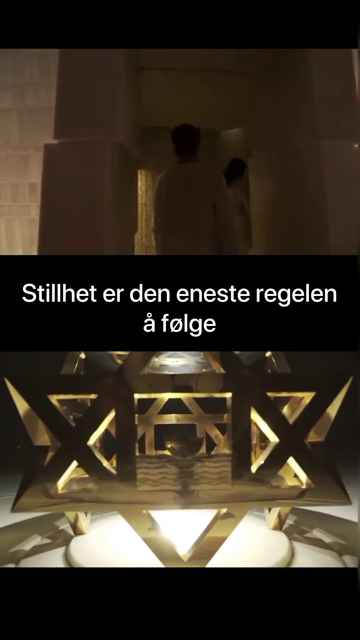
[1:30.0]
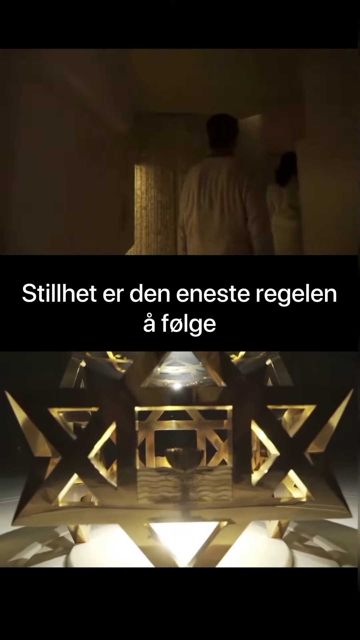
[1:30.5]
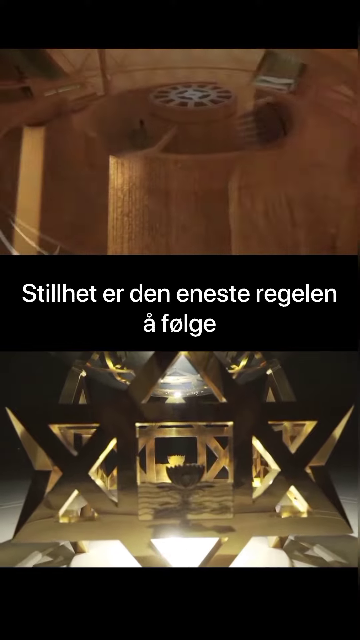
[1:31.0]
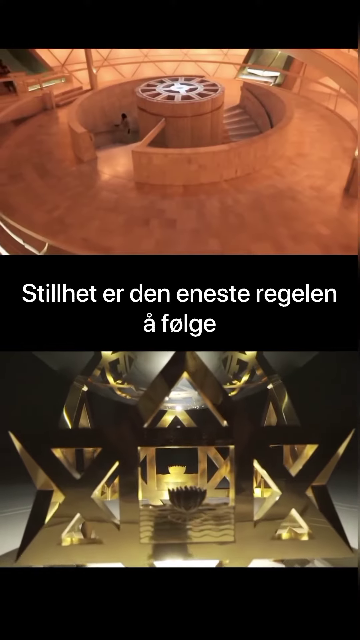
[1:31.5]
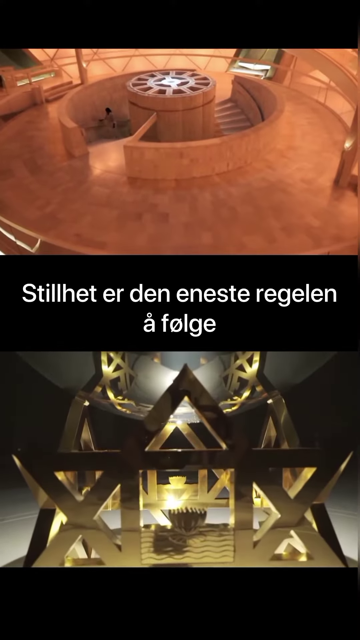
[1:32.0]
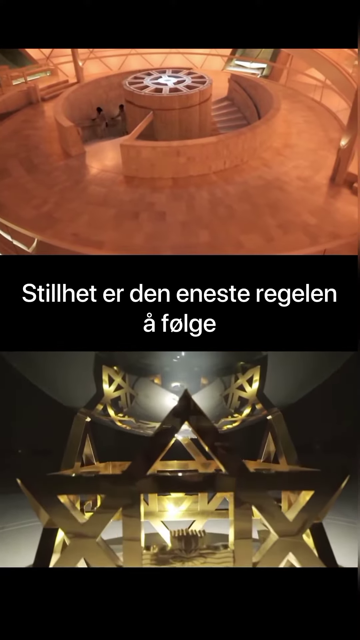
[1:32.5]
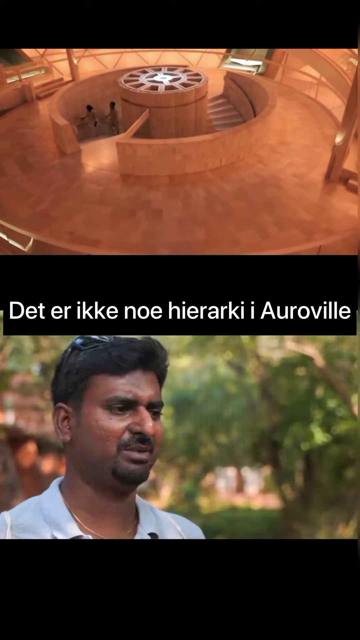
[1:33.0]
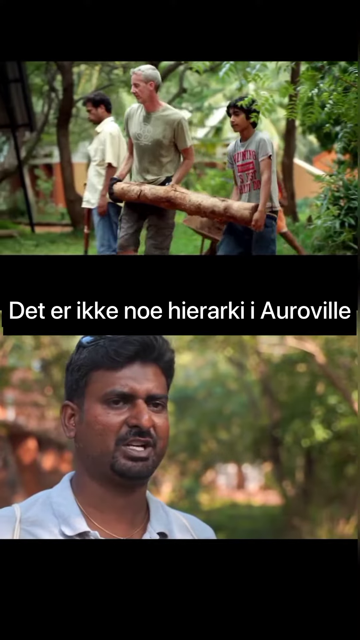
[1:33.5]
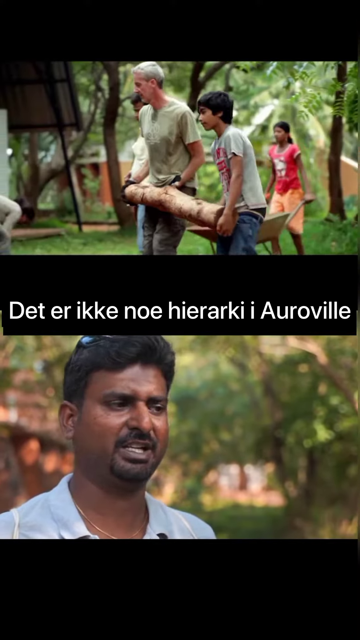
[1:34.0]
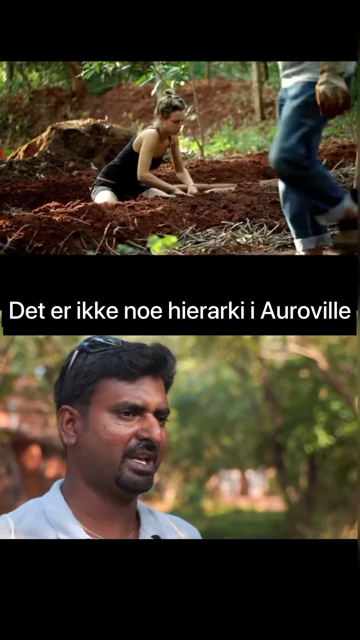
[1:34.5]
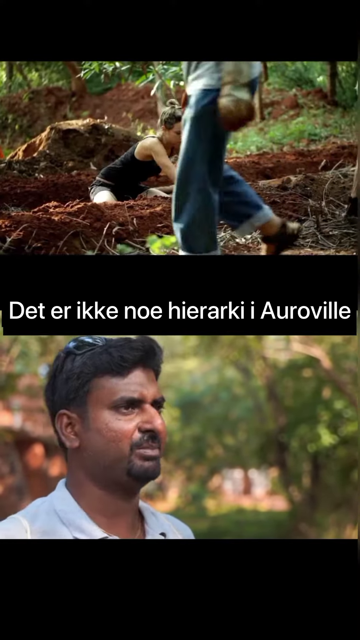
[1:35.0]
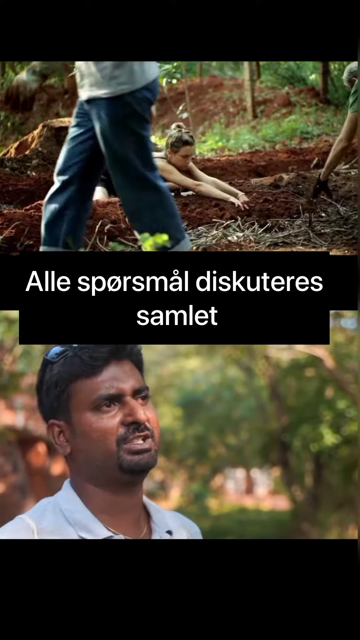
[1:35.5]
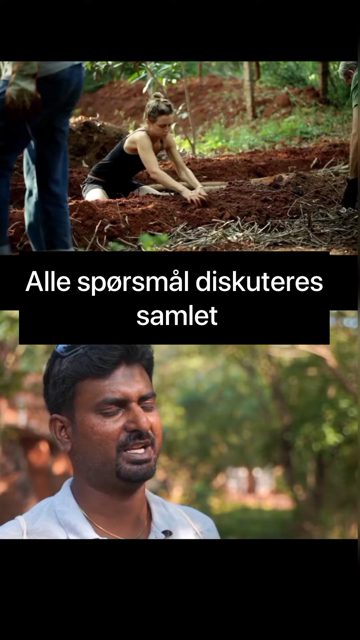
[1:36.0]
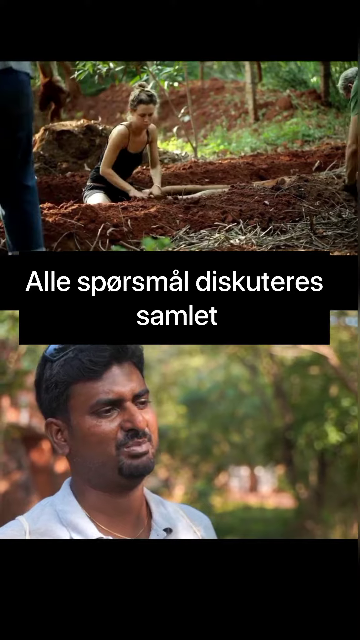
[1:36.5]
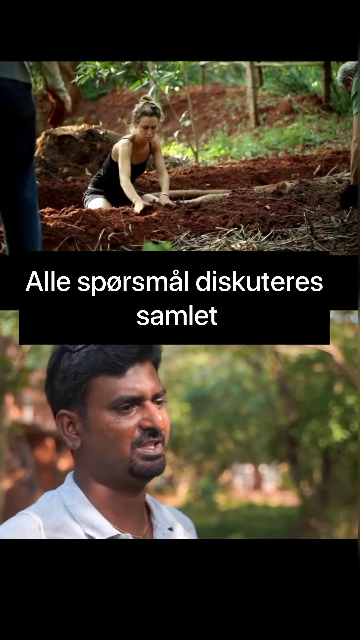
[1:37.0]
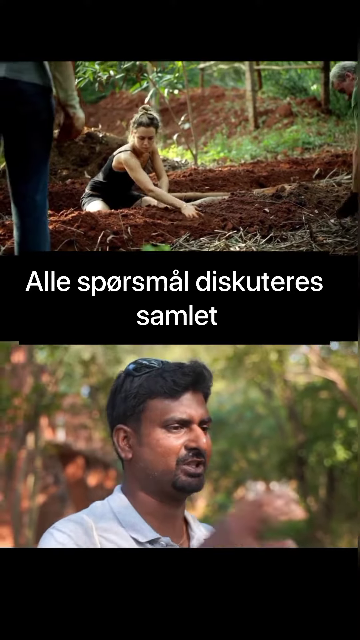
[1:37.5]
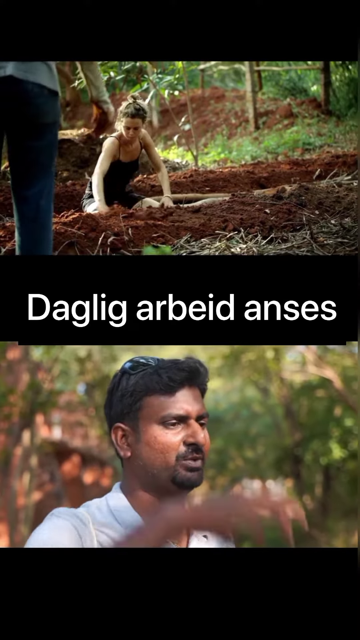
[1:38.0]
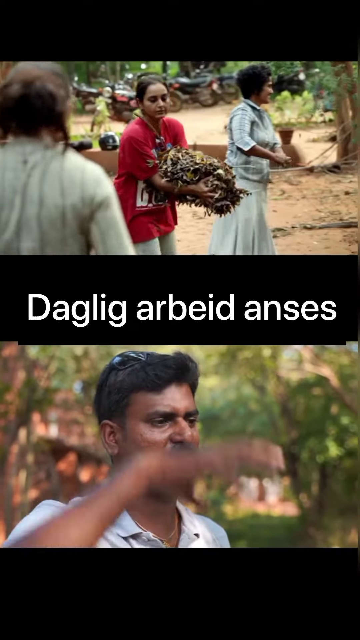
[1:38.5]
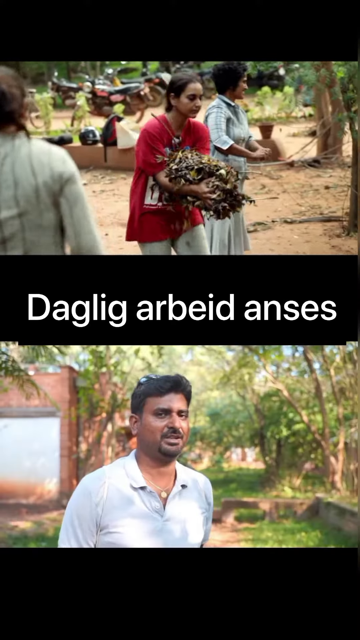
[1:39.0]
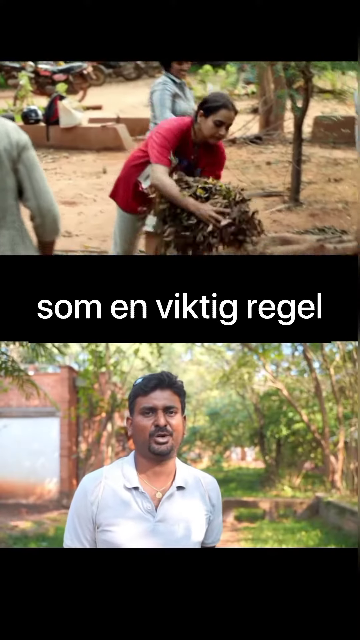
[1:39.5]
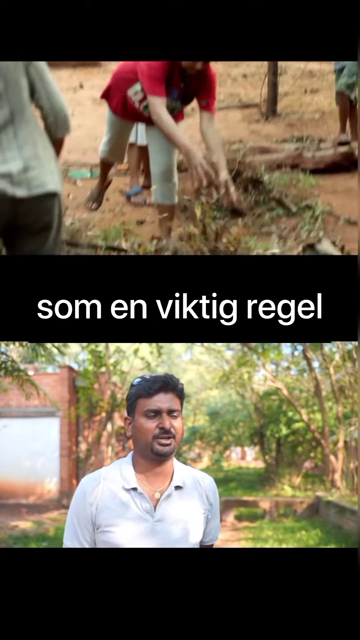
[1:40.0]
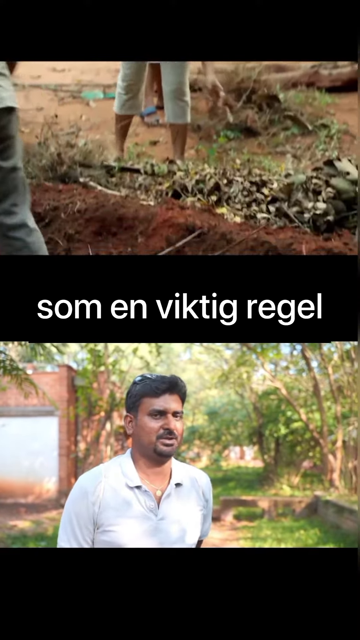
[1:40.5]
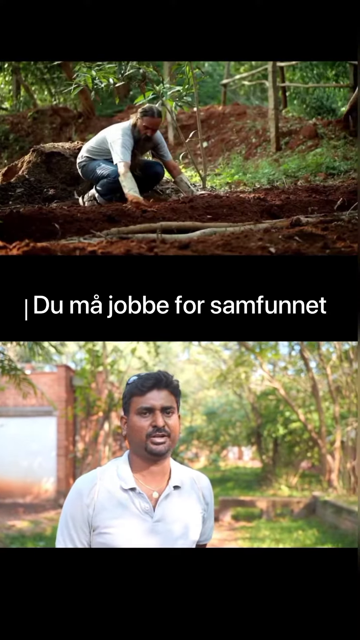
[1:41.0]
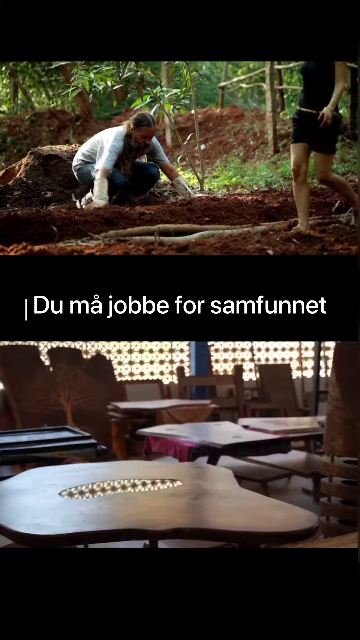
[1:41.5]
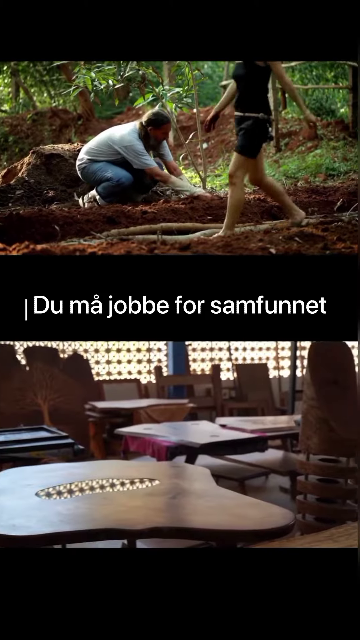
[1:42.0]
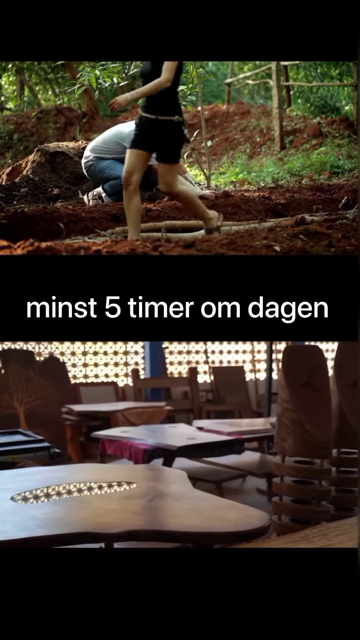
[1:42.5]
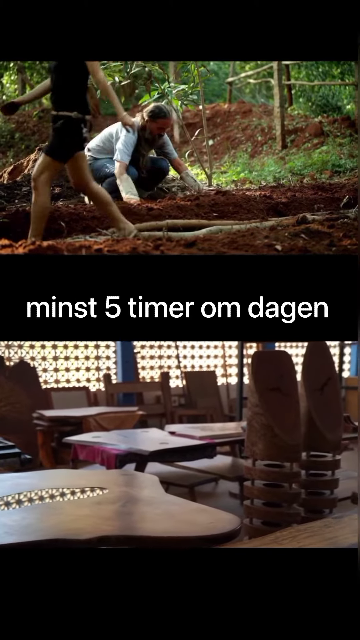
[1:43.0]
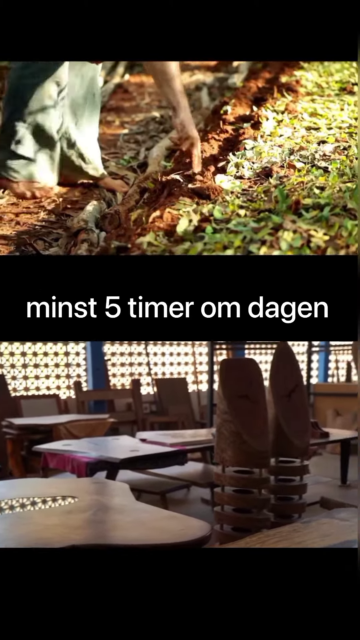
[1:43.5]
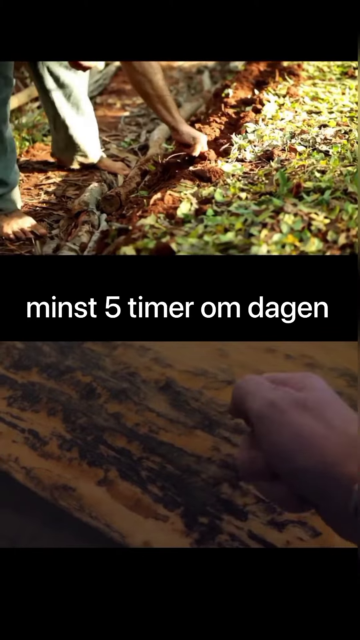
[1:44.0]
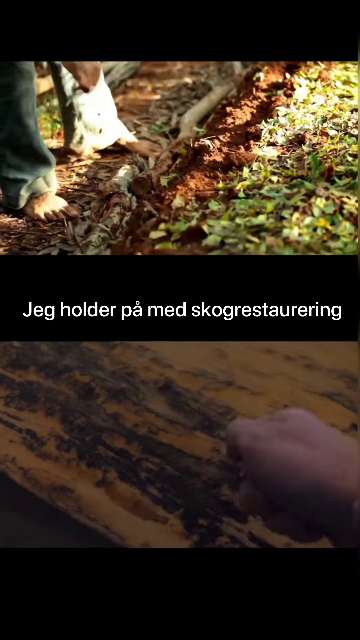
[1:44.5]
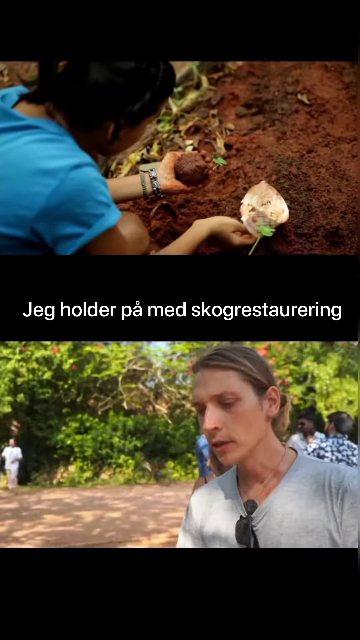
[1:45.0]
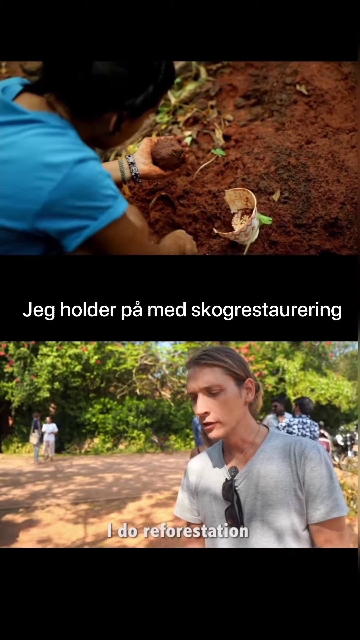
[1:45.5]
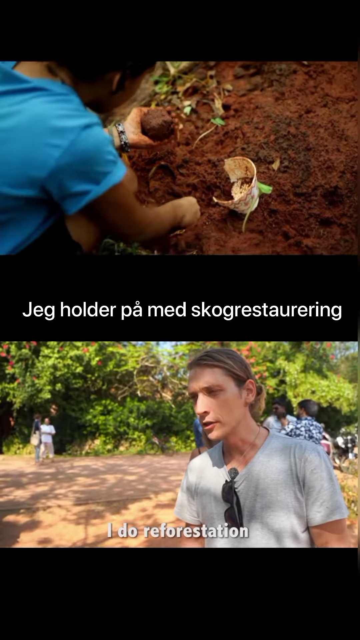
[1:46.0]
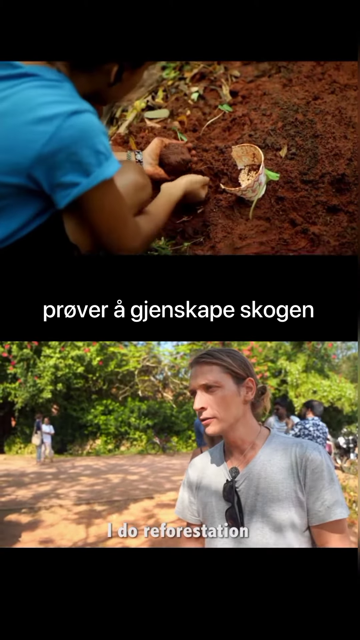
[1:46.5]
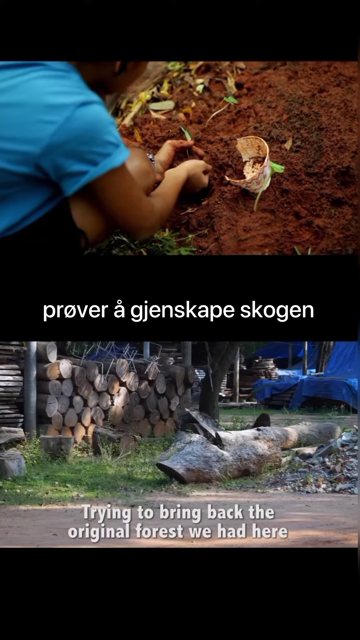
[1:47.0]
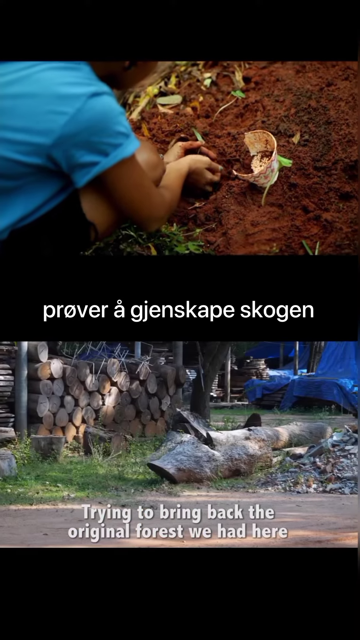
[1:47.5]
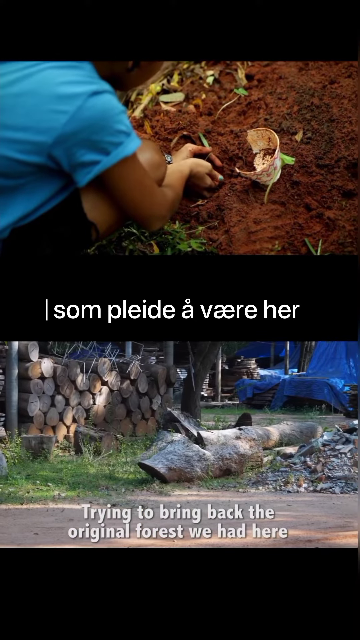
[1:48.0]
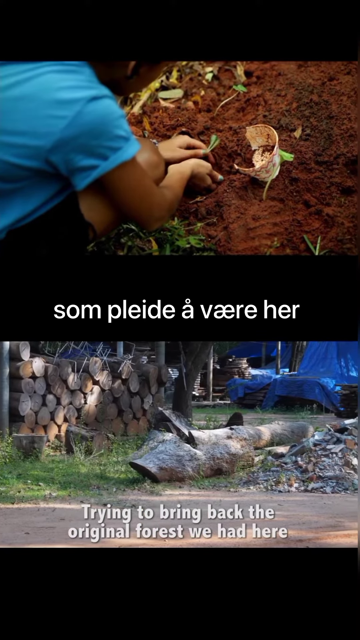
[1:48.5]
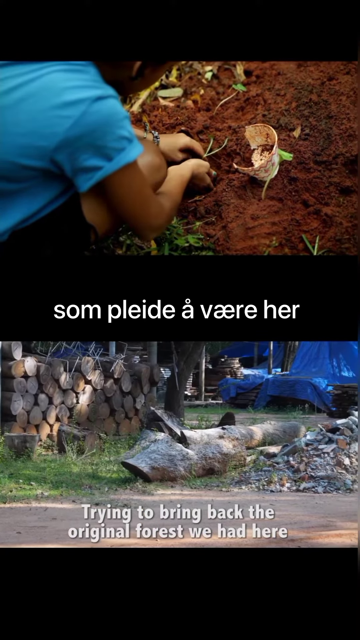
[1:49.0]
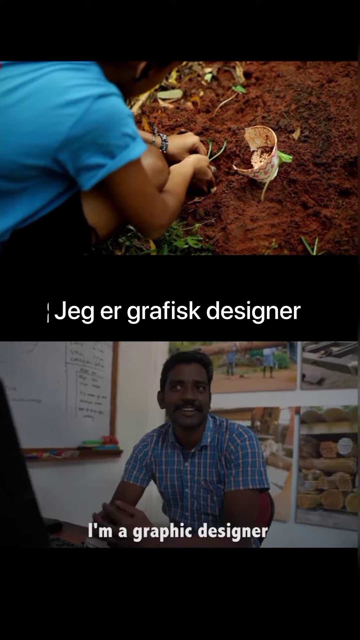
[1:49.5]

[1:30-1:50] The gold structure is still featured, now alongside people building the community. Someone works in the earth, possibly building a structure, someone plants gardens and plants, and people move logs. In the lower part of the screen, people talk: one man says he does reforestation and is trying to bring the original forest back, and another says he was a graphic designer.